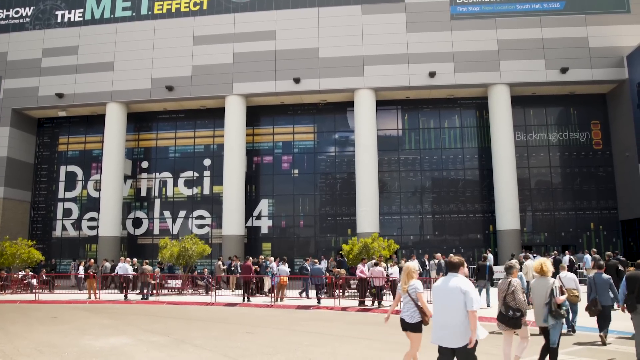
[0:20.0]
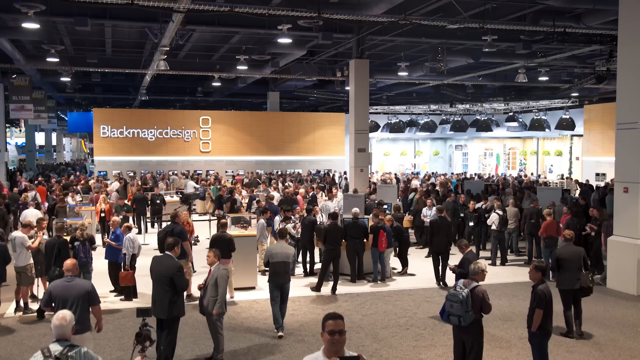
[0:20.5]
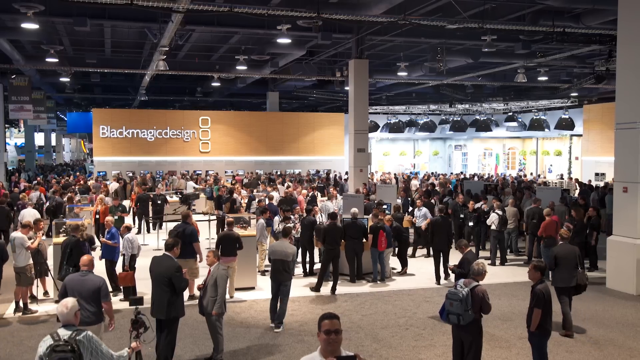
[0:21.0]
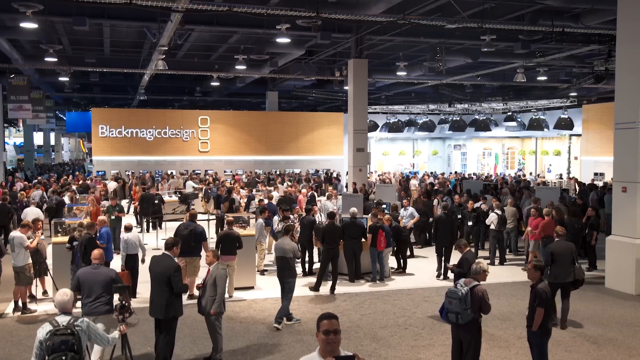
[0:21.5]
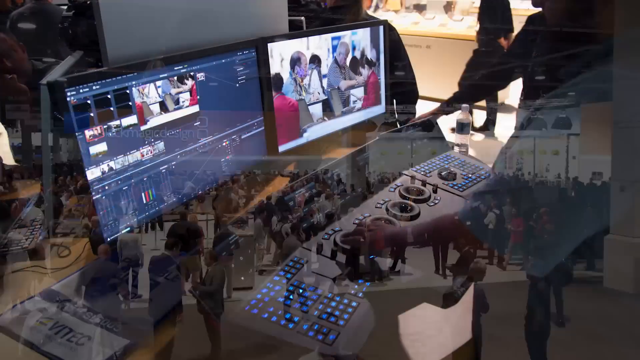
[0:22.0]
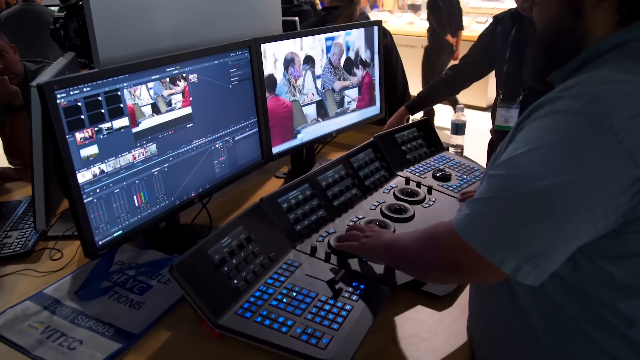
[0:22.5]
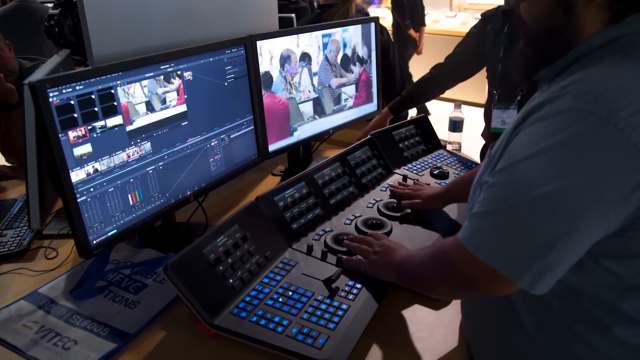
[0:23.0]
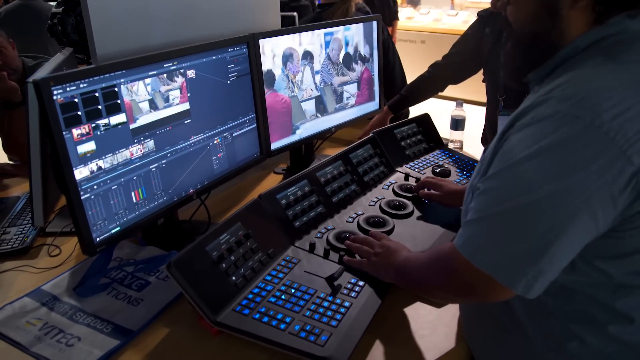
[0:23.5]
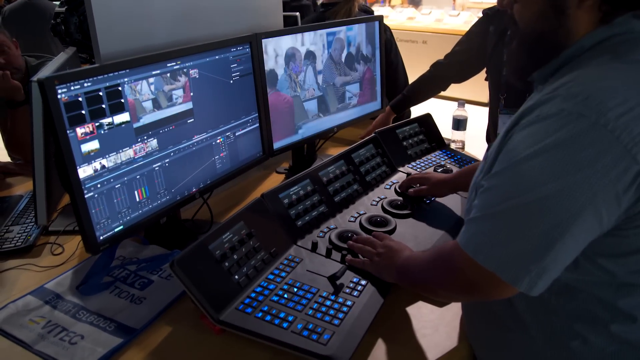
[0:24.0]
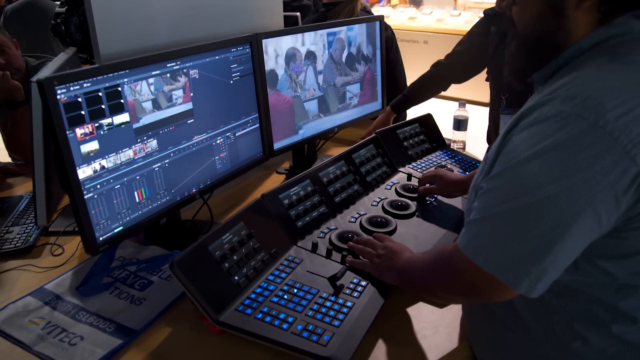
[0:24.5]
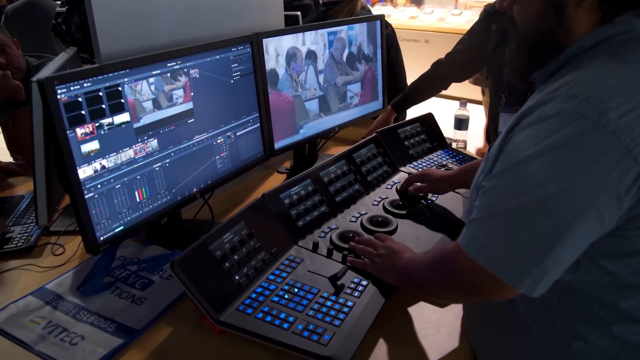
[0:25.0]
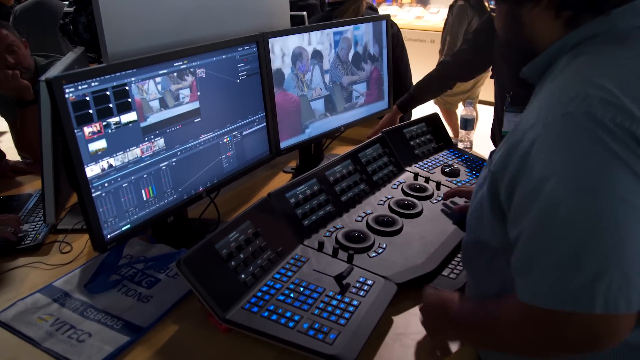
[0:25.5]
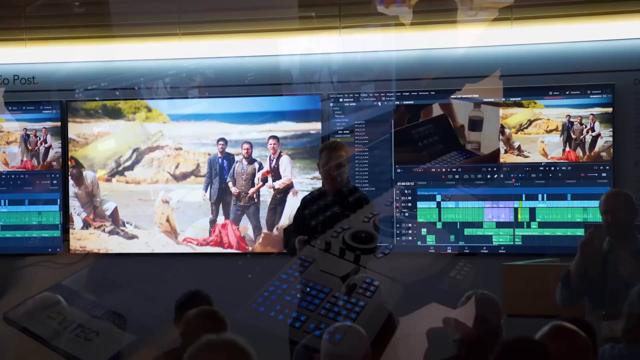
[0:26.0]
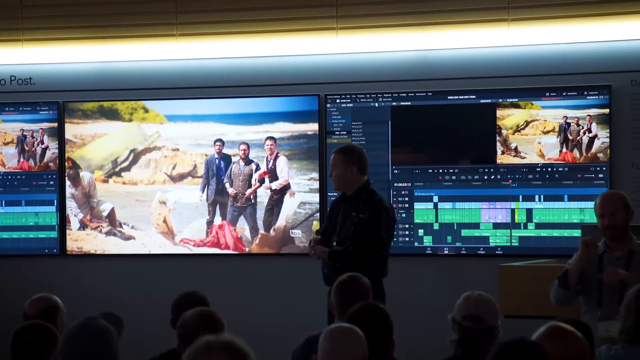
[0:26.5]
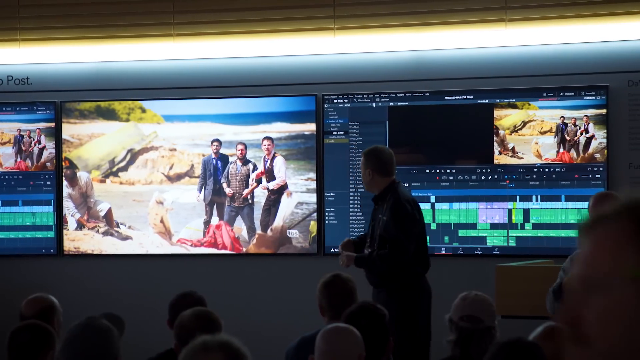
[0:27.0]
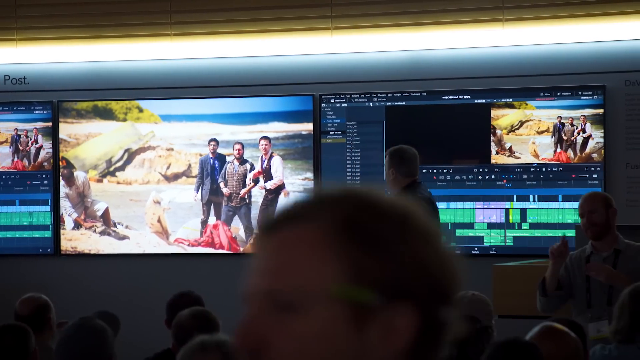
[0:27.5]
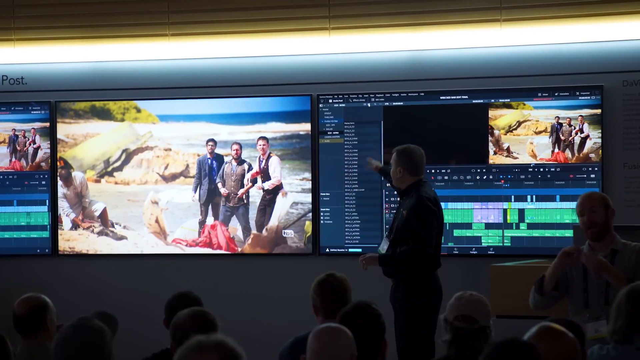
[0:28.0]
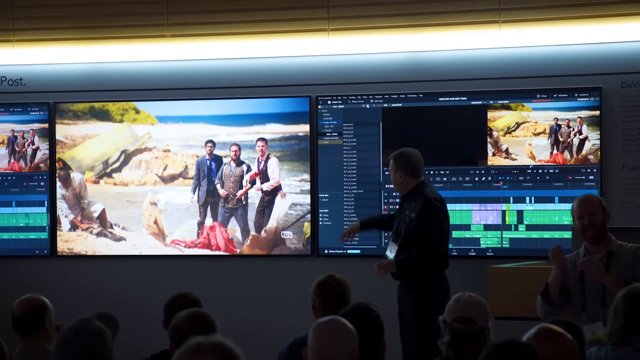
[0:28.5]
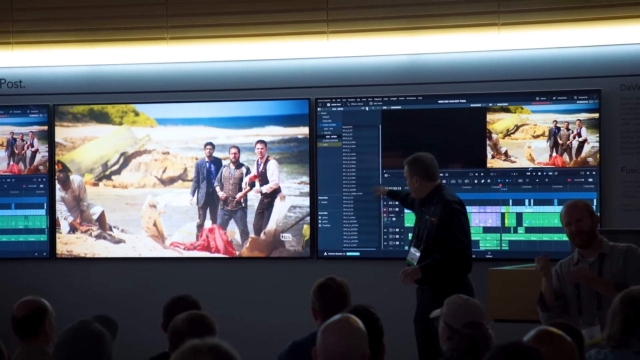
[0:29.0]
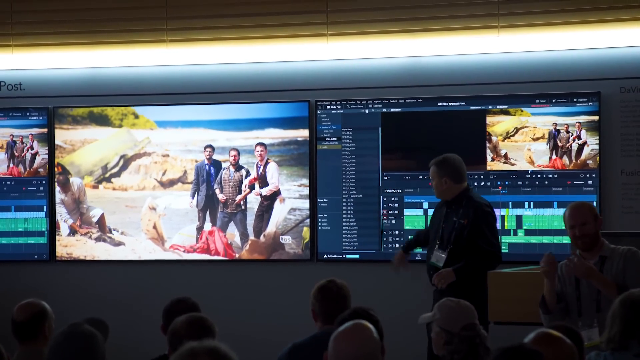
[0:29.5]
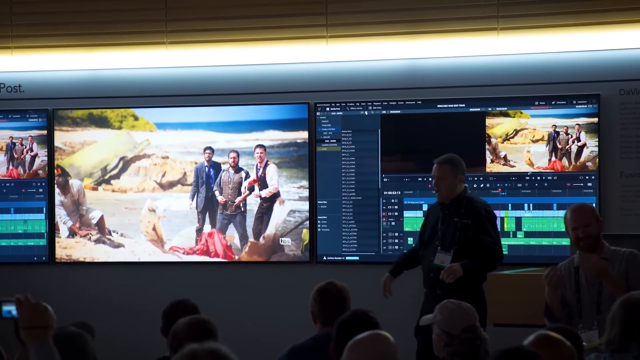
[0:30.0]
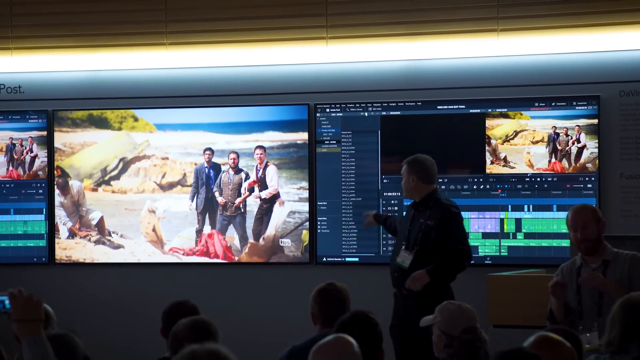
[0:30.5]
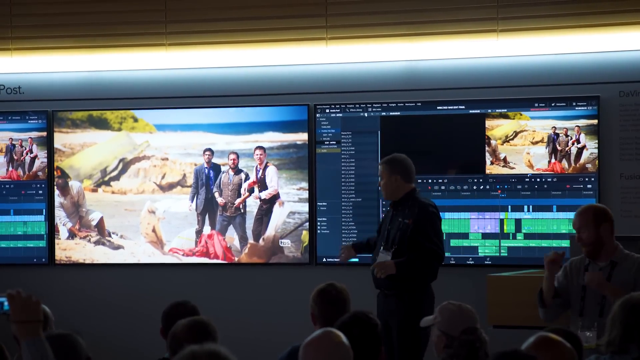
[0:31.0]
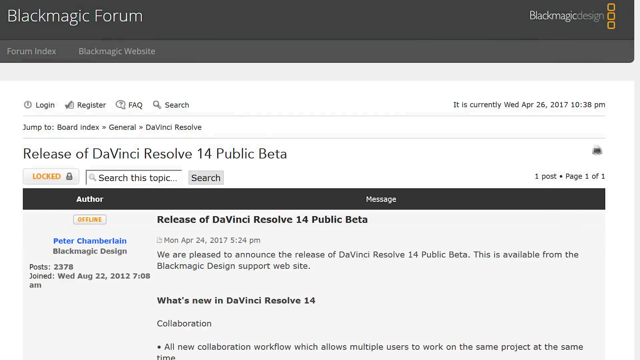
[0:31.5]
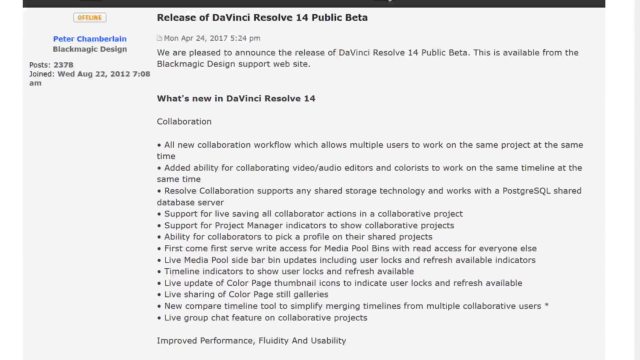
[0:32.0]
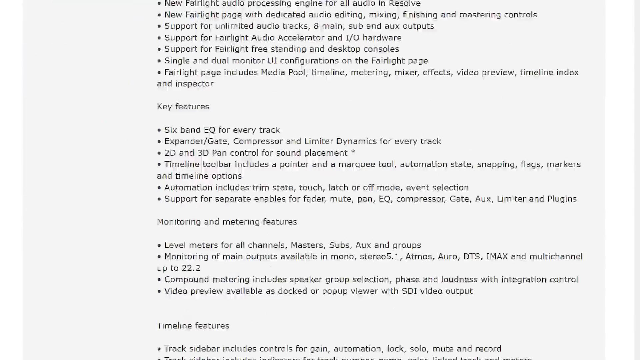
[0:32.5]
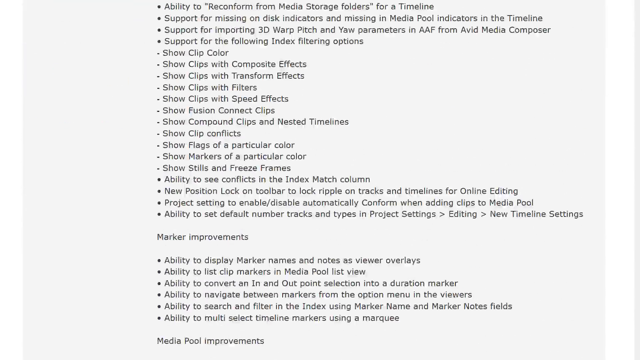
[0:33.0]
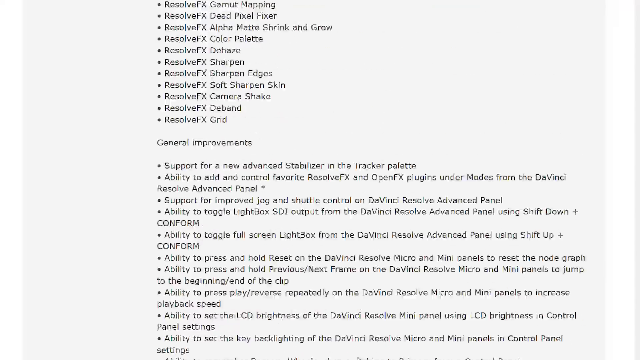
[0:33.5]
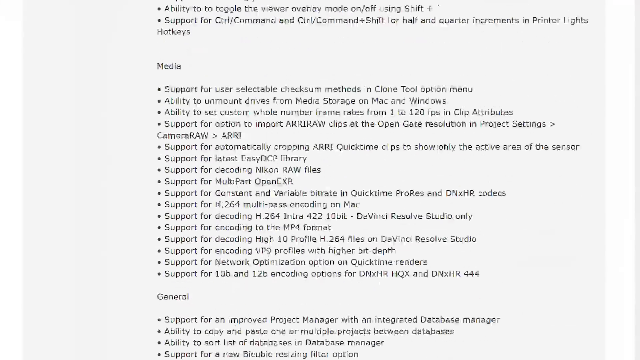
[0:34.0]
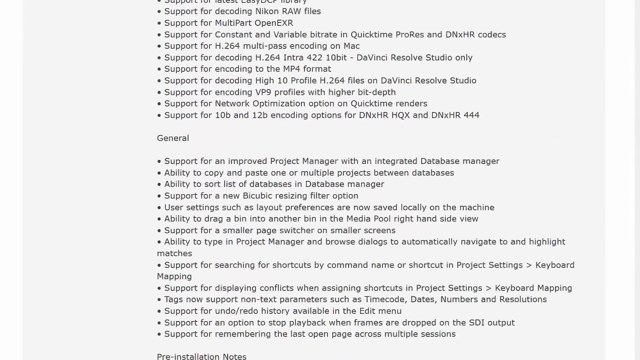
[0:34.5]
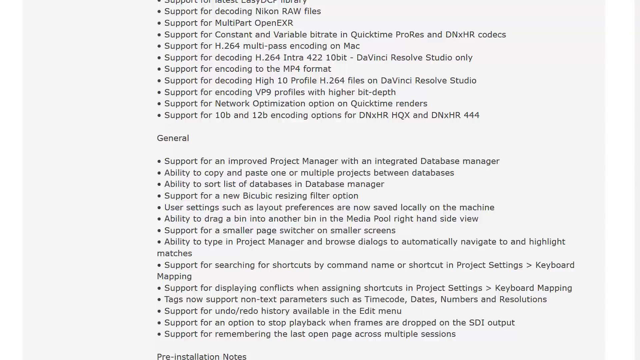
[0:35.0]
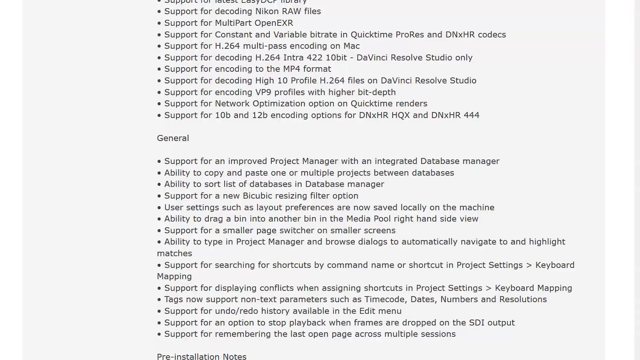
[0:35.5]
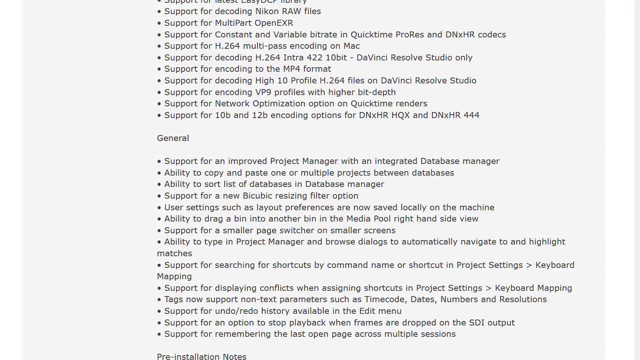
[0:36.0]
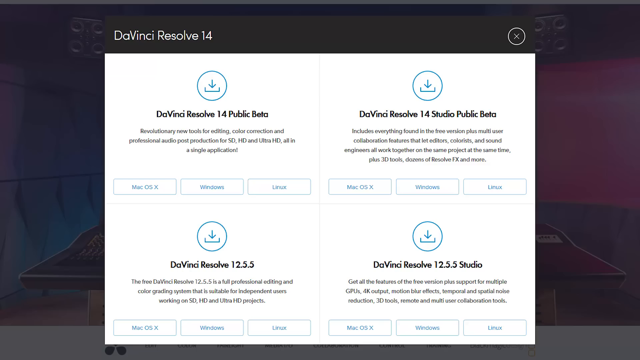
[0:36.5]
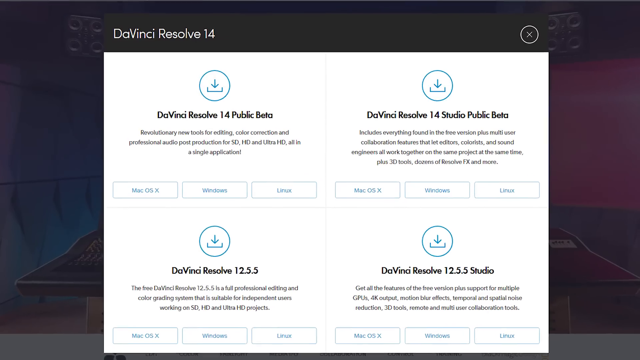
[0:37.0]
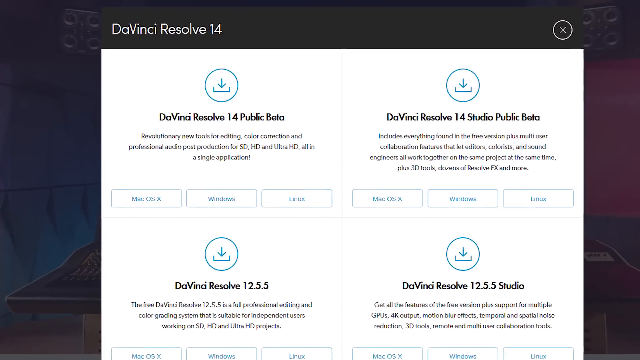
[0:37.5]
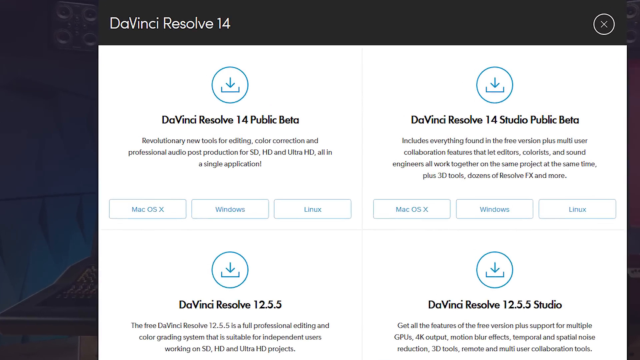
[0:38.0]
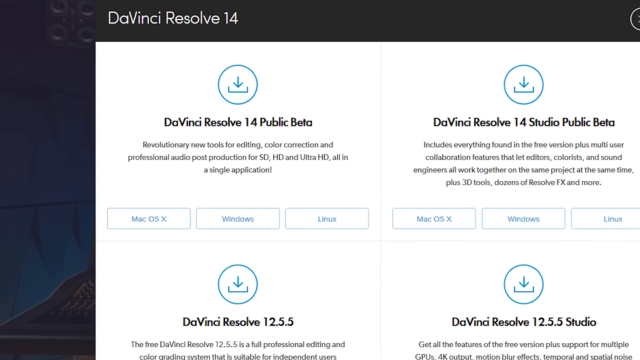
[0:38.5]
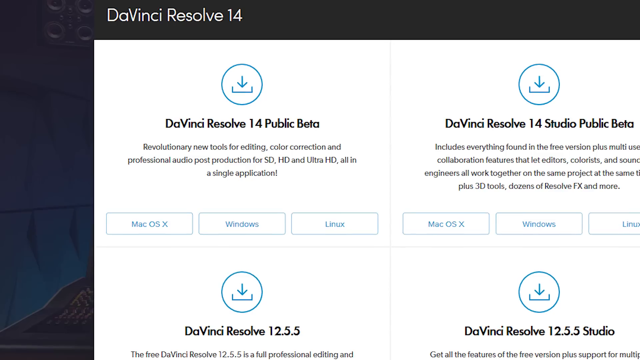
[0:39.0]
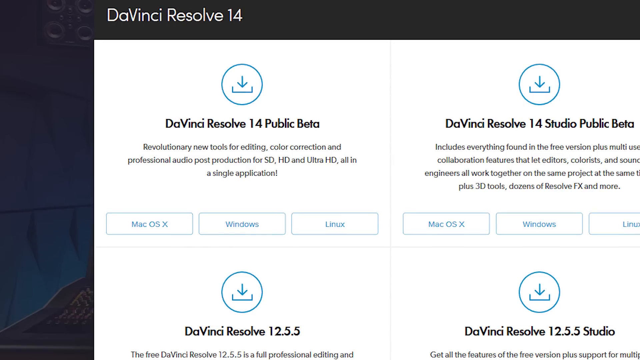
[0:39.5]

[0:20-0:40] Inside the building, DaVinci Revolve 14 is shown. Afterward, a lot of people seem to be gathered inside the building. Then there appear to be people in control, possibly CCTV footage from a control room, or people controlling the screens for the presentation. The gathered people seem to be waiting for the Linus Tech Tips coverage, waiting patiently and enjoying themselves.